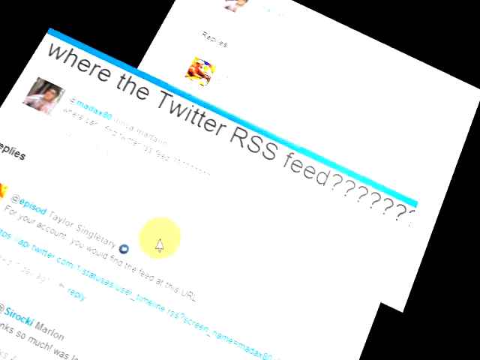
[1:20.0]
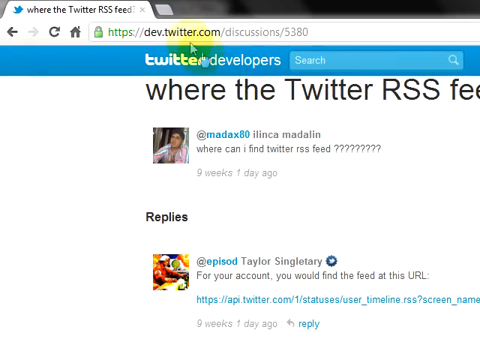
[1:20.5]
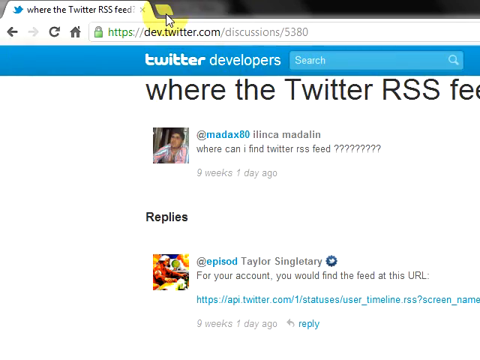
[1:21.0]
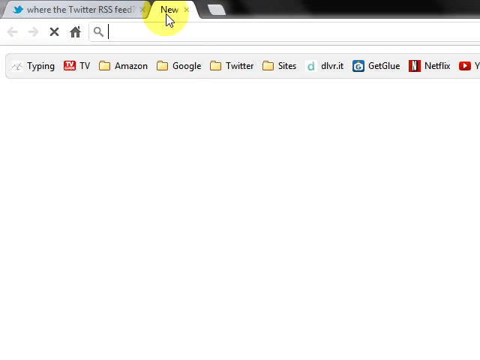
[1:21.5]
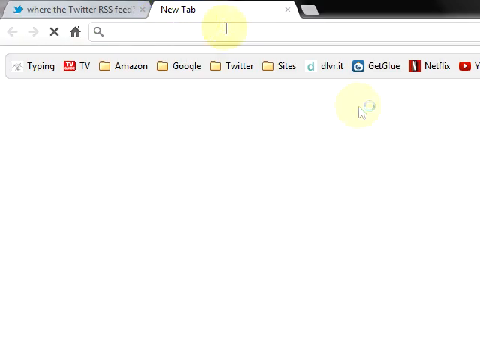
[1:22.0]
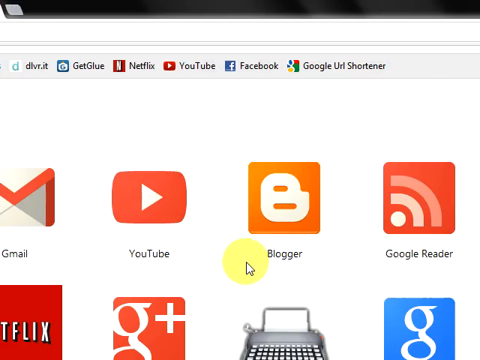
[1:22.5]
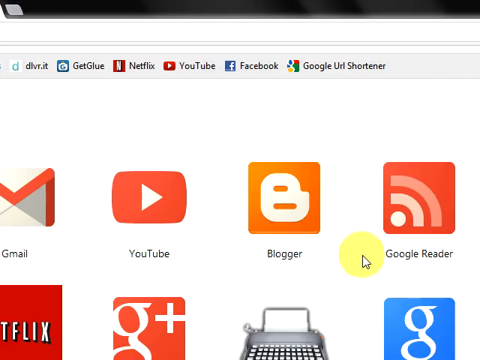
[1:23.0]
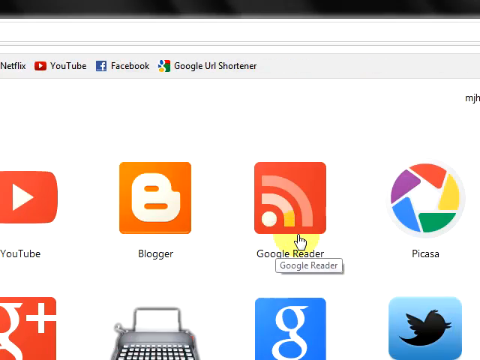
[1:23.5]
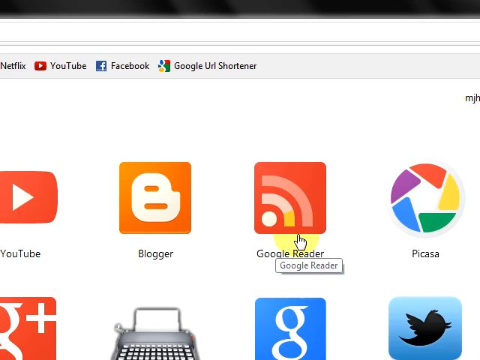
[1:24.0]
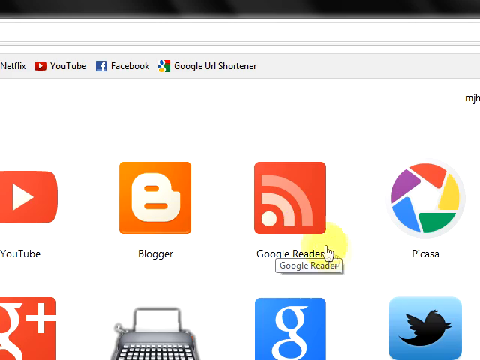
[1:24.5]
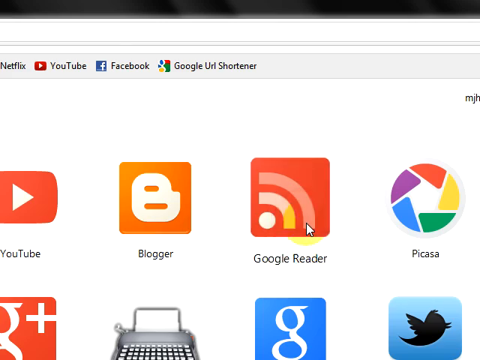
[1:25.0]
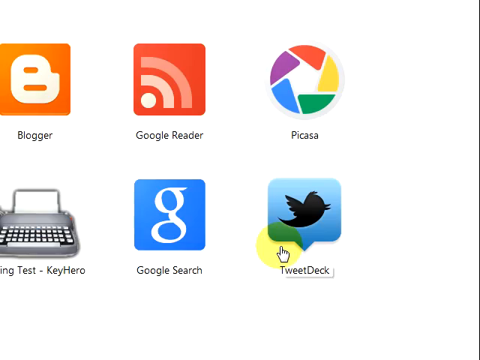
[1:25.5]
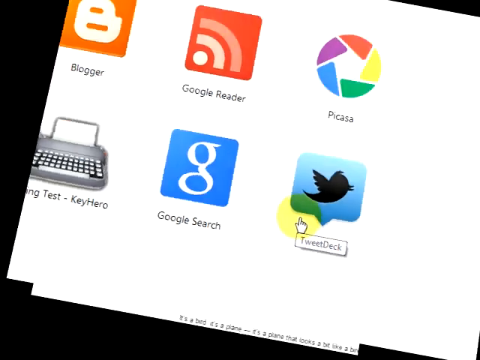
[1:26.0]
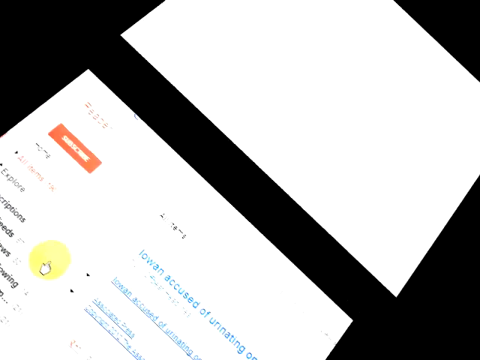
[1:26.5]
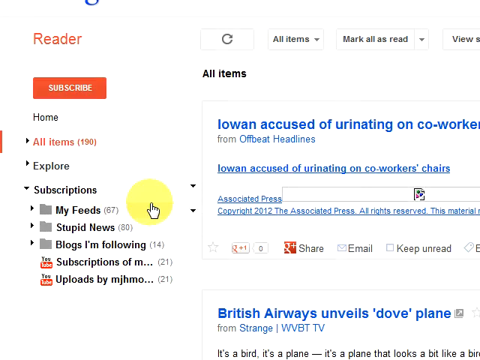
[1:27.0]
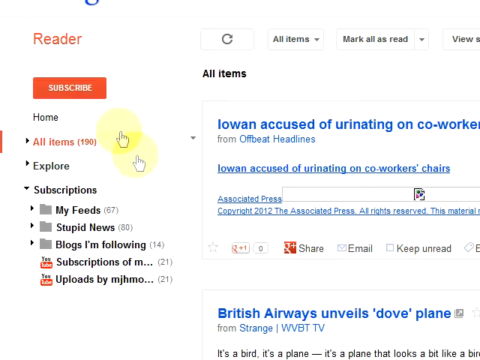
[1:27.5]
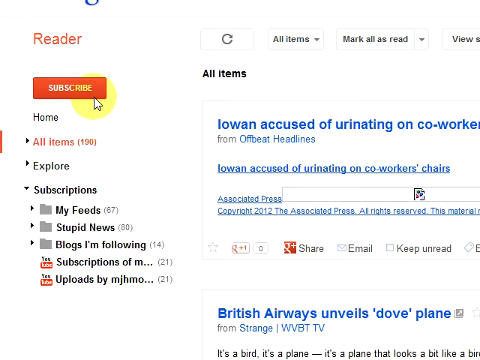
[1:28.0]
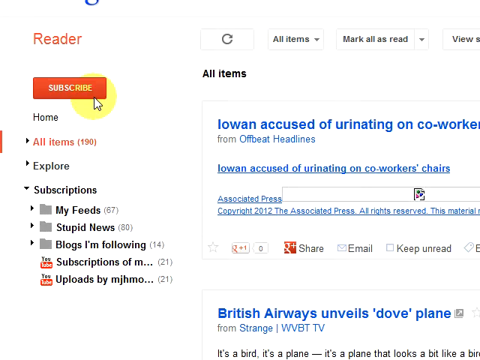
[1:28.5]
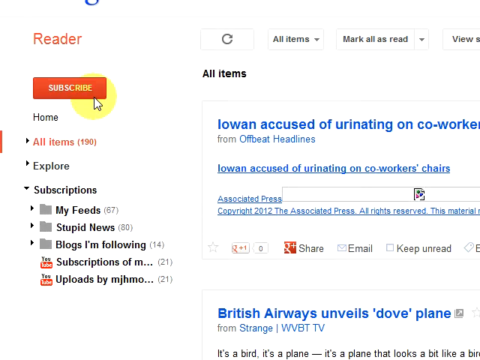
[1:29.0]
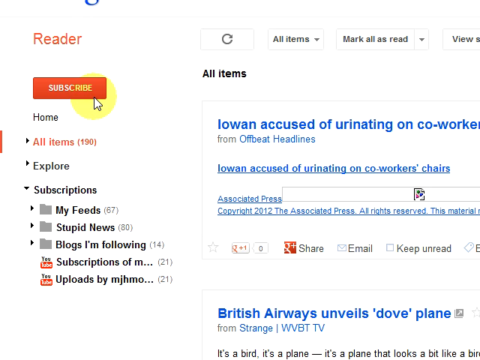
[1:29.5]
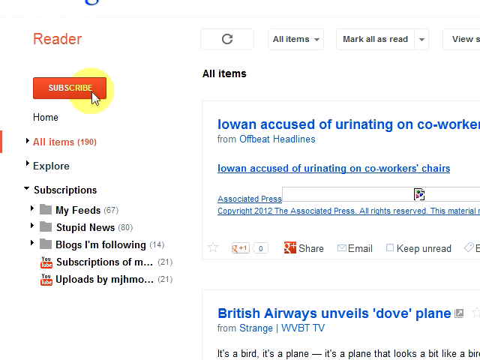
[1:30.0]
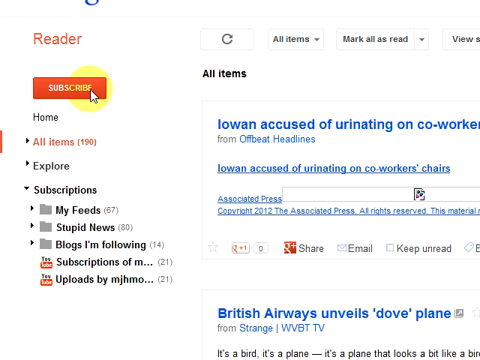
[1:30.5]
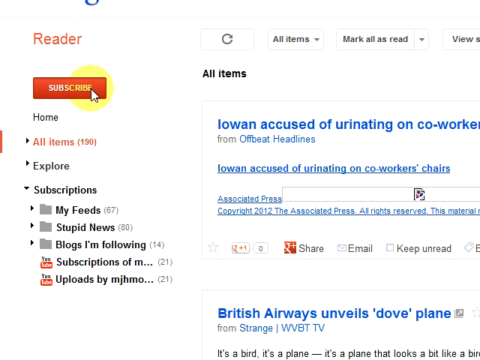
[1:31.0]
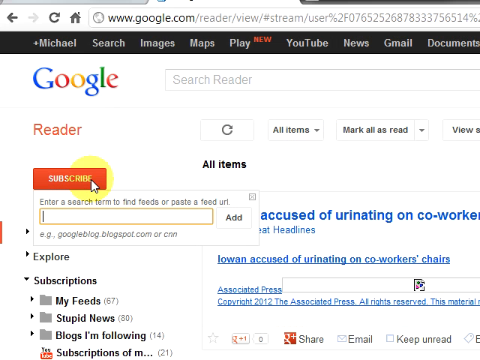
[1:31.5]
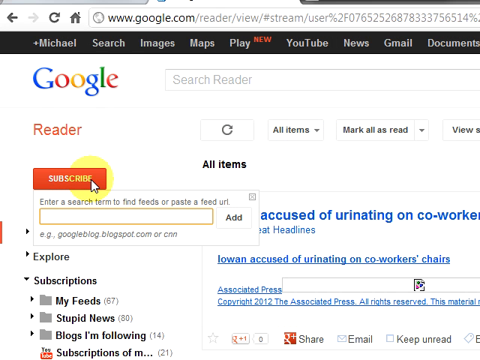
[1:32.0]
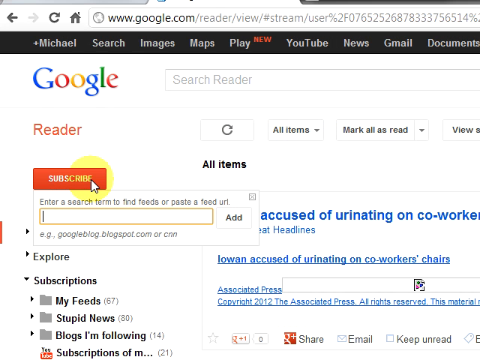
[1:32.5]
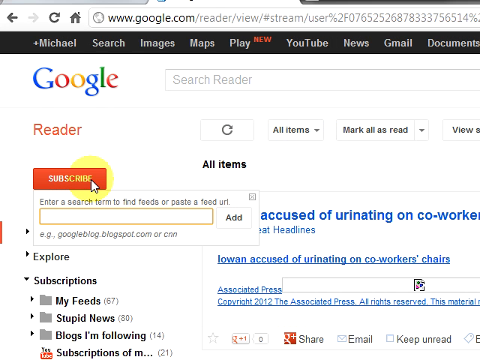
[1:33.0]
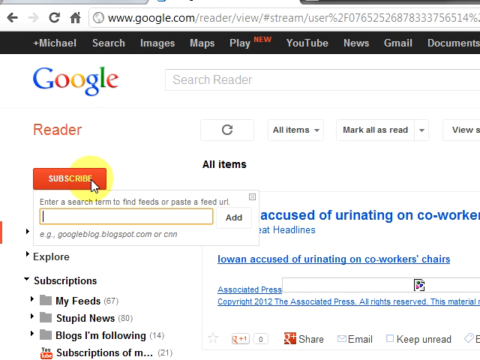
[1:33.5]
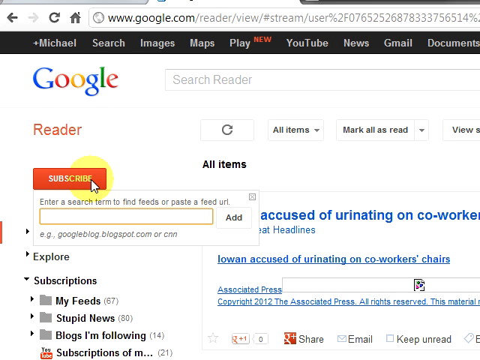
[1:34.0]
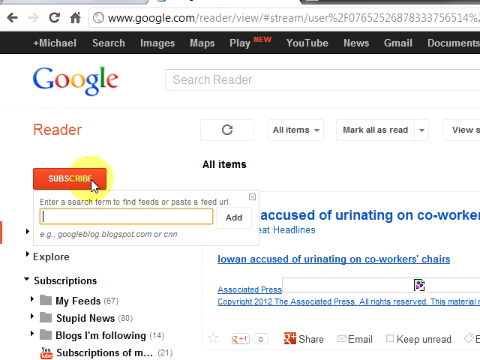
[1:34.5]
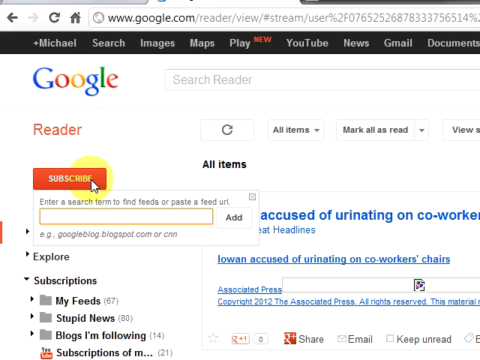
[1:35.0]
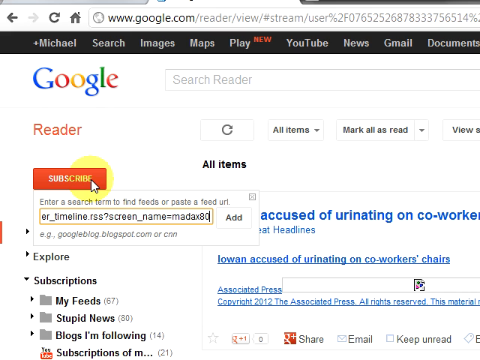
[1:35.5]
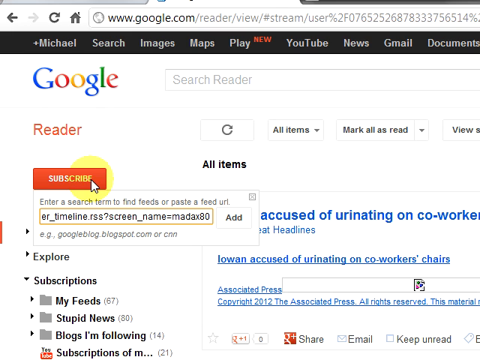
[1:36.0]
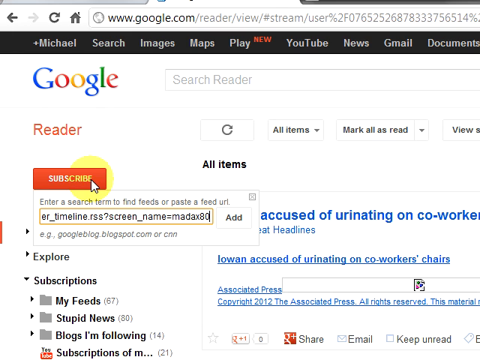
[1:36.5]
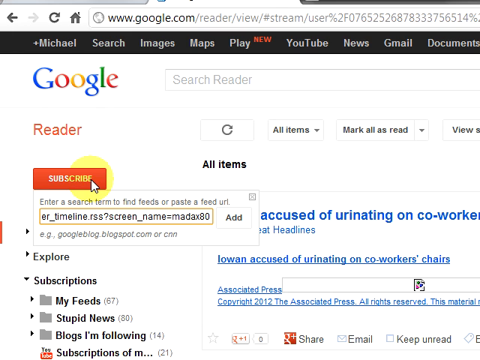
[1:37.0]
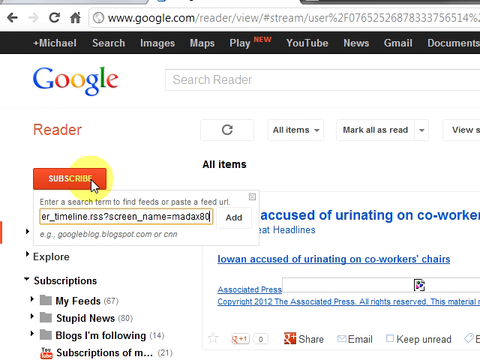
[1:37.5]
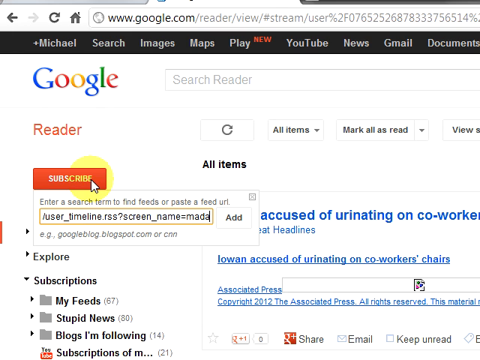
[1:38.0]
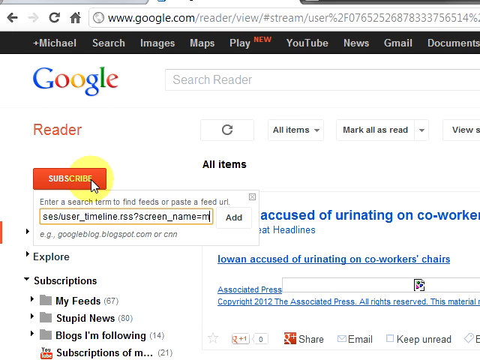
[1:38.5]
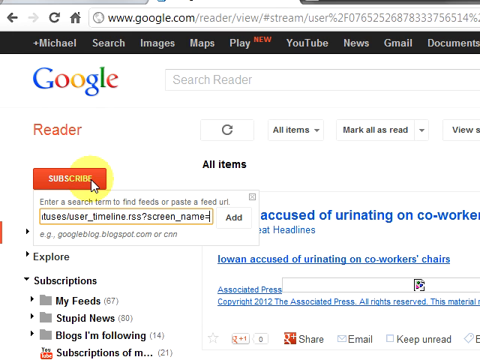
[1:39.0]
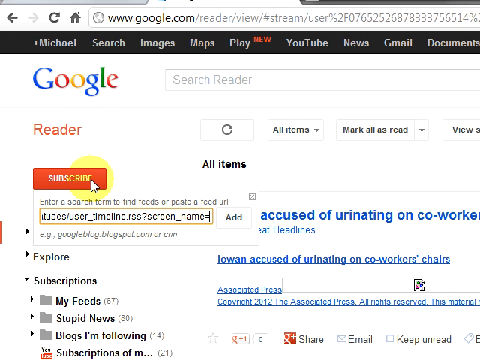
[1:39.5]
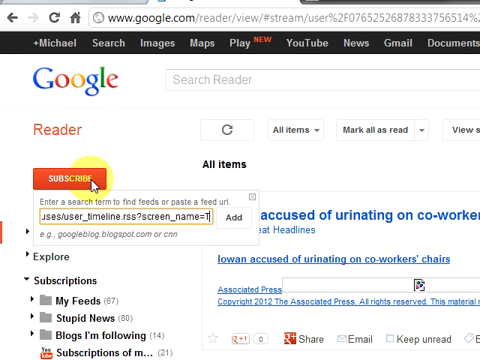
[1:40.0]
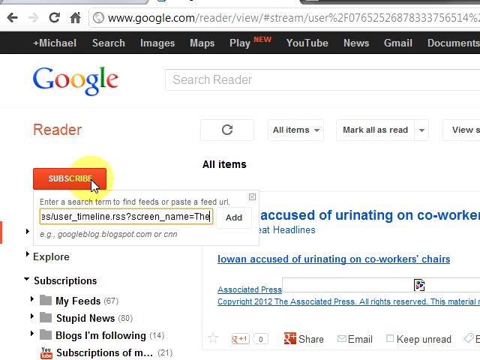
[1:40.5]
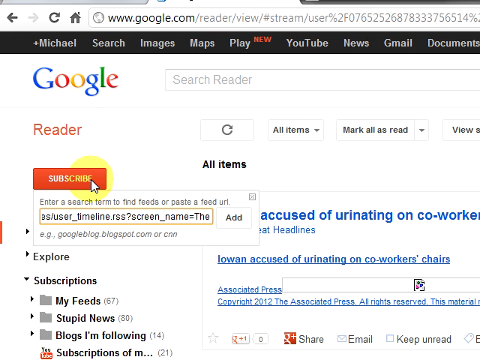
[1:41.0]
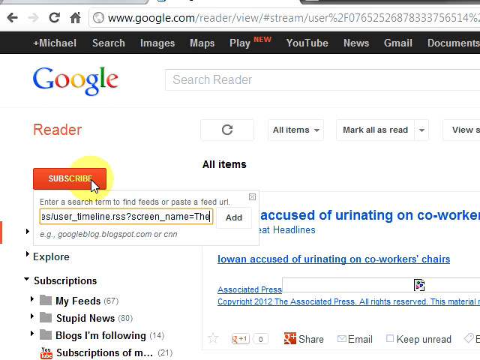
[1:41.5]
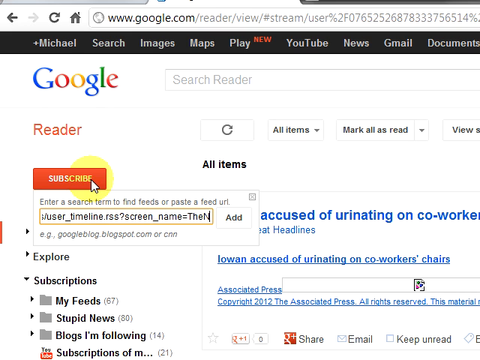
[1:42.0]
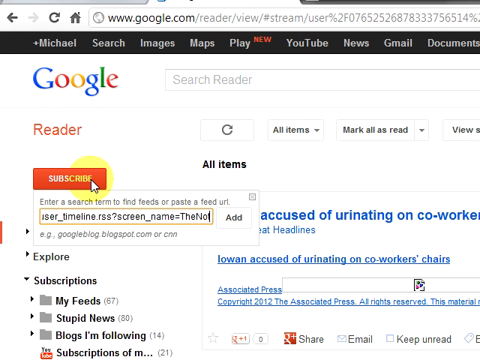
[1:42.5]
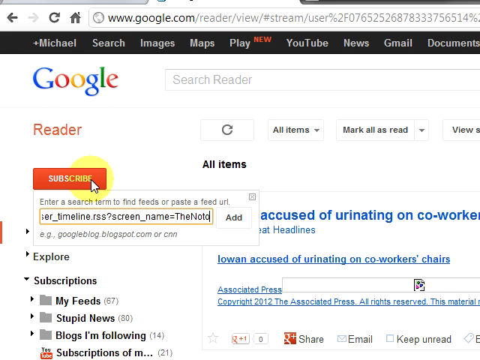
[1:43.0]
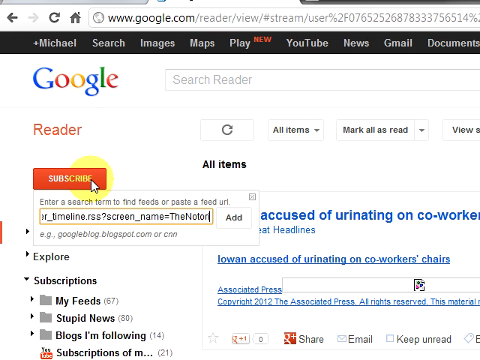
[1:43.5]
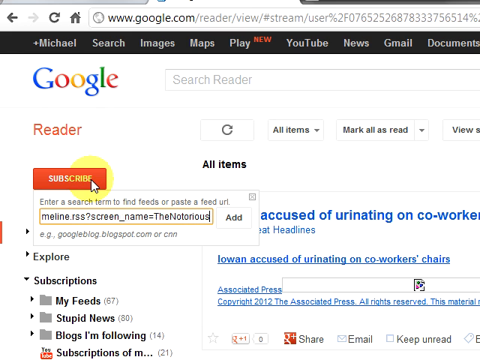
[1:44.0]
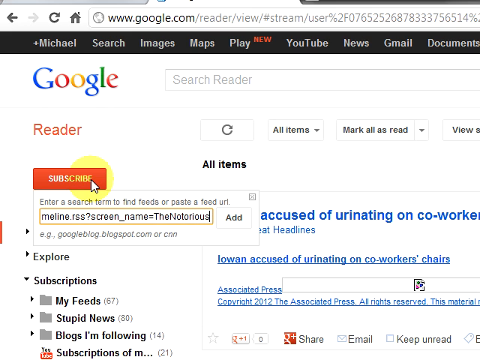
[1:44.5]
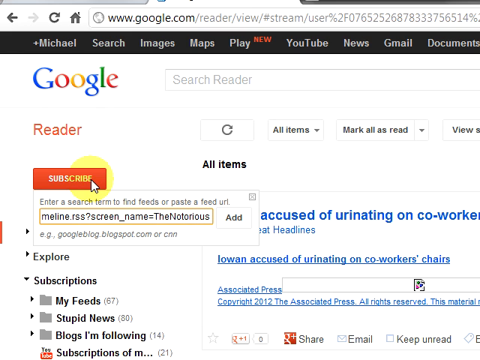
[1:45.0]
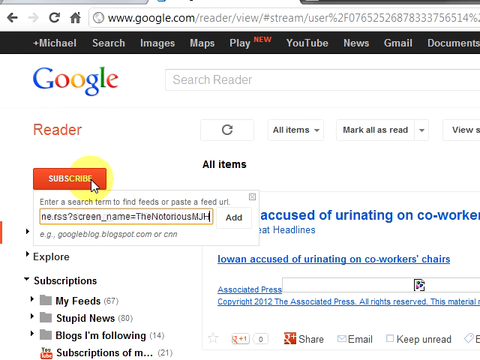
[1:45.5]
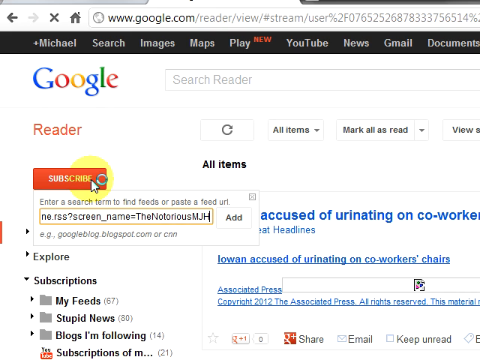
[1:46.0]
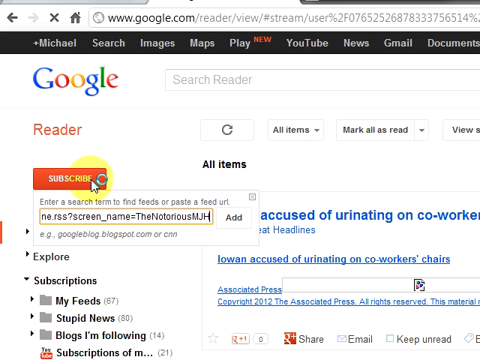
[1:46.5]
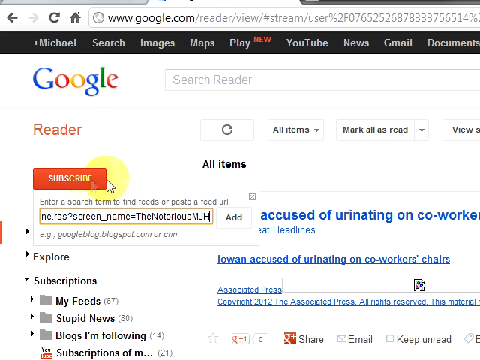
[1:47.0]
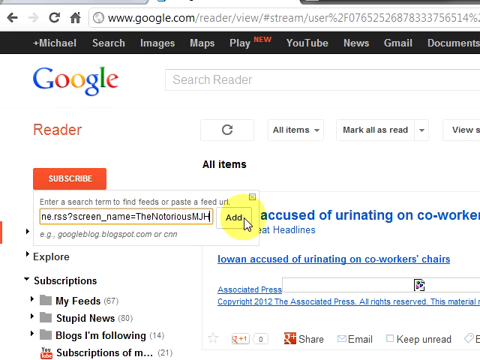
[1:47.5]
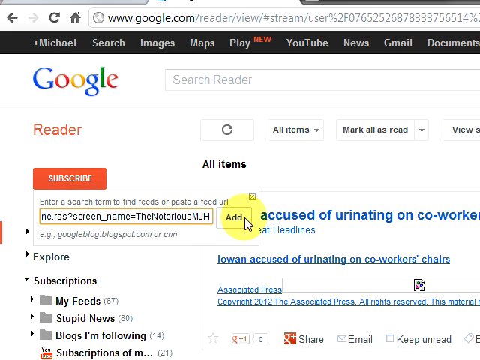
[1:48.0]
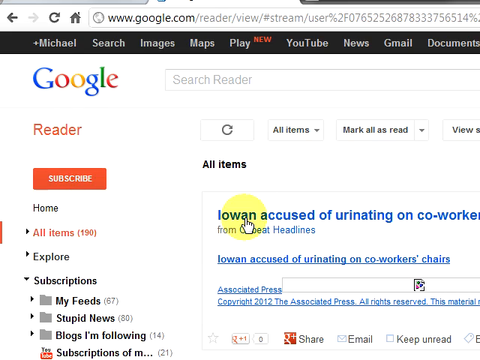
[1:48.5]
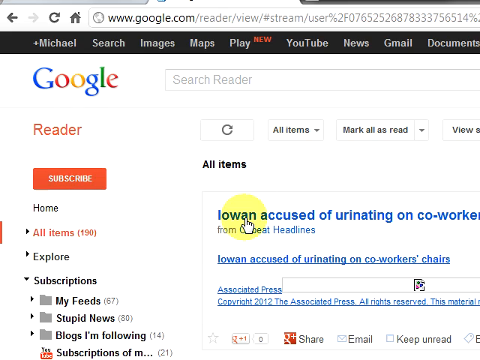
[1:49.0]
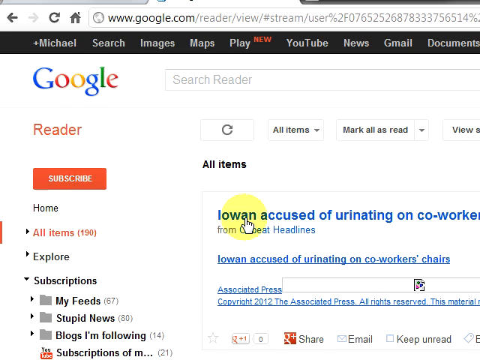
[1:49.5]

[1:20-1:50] The person opens a new browser tab and clicks on an icon that says "Google Reader." A new page opens in Google Reader, with a red button that says "subscribe" on the left-hand side and some folders also on the left. The cursor moves to the red "subscribe" button, and a search bar pops up underneath it that says "enter a search term to find feeds or paste a feed url." With the cursor in this field, the person pastes in the link they just copied, backspaces some characters, types "The Notorious MJH." and clicks the "add" button. The screen then begins to transition to the next scene.